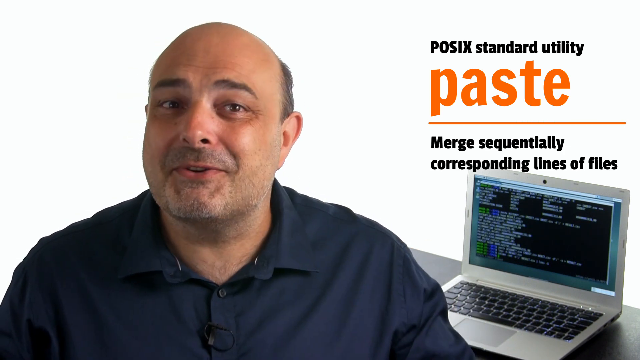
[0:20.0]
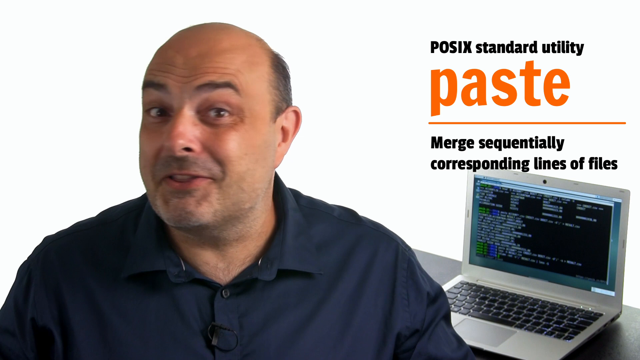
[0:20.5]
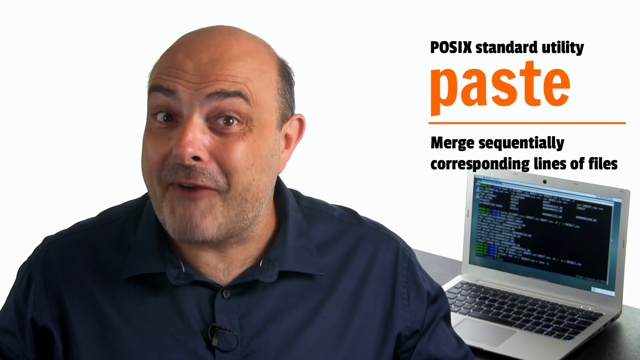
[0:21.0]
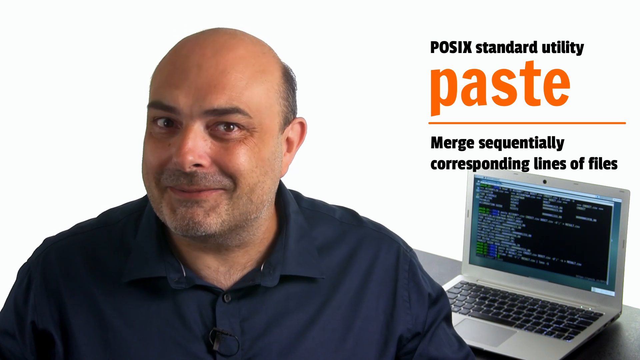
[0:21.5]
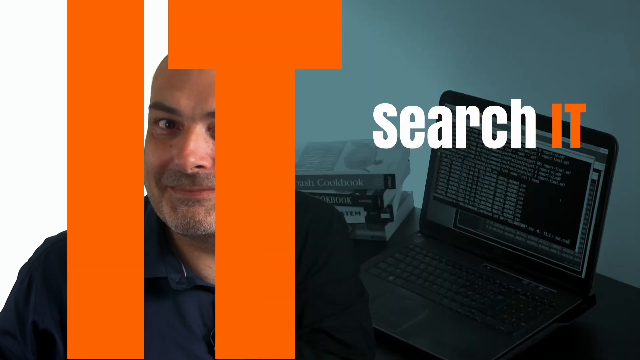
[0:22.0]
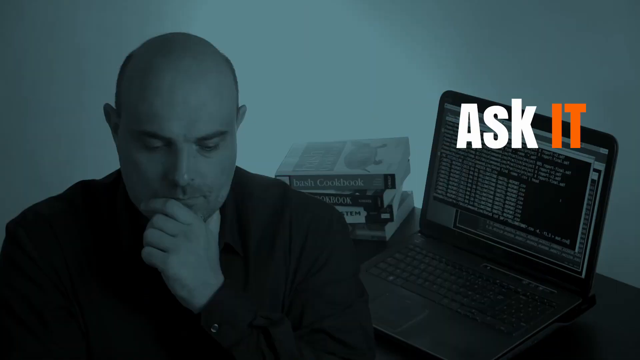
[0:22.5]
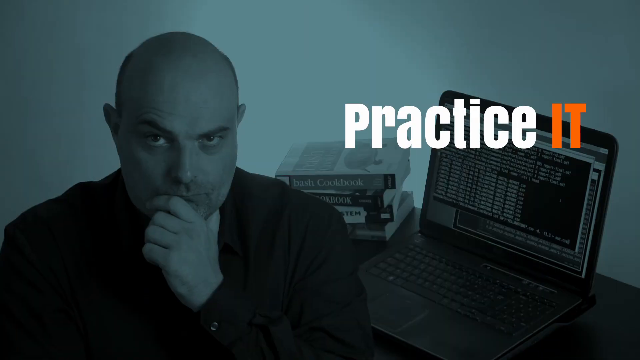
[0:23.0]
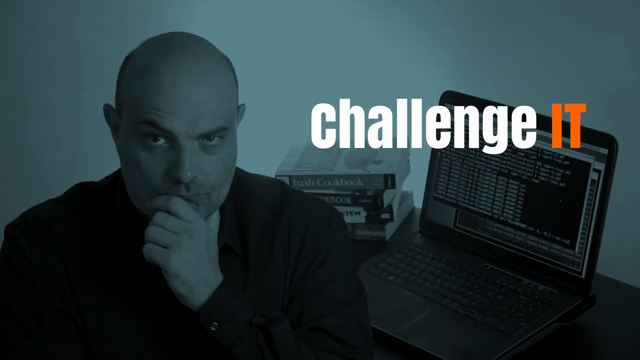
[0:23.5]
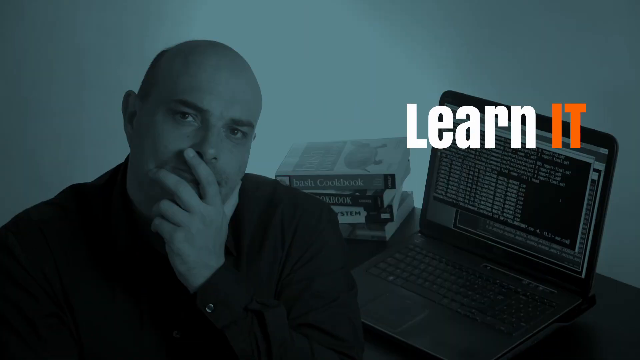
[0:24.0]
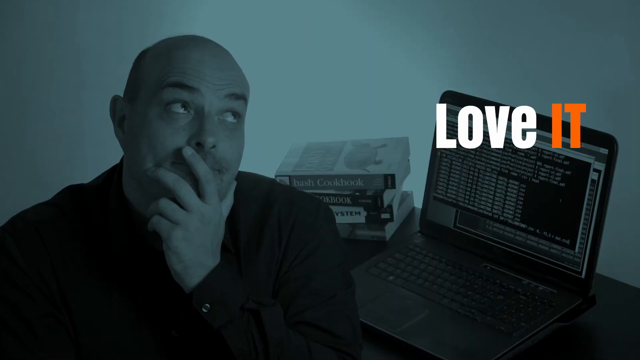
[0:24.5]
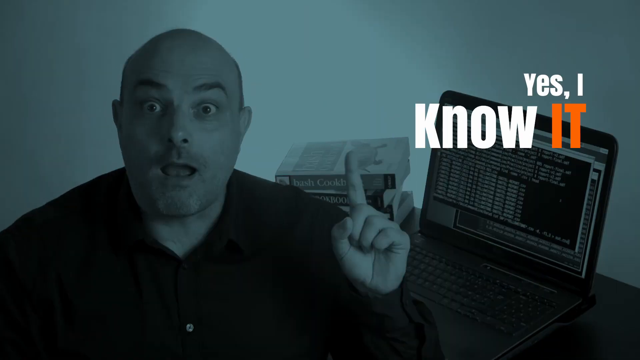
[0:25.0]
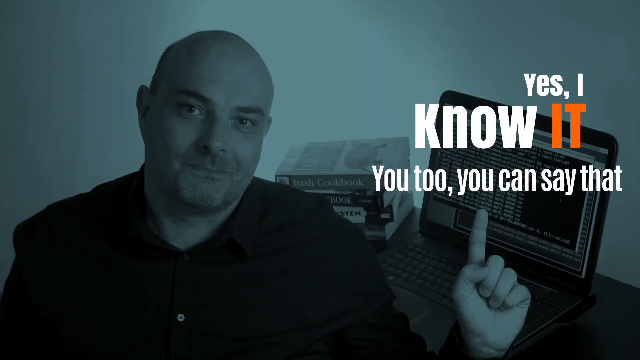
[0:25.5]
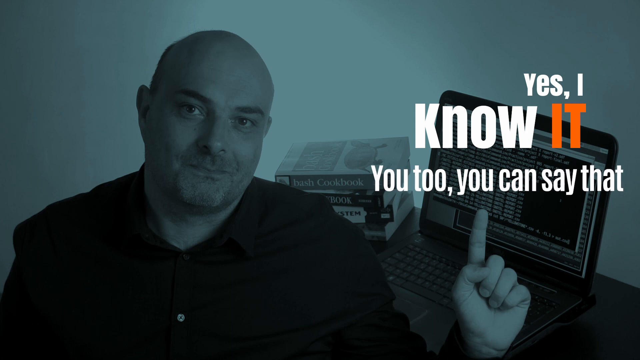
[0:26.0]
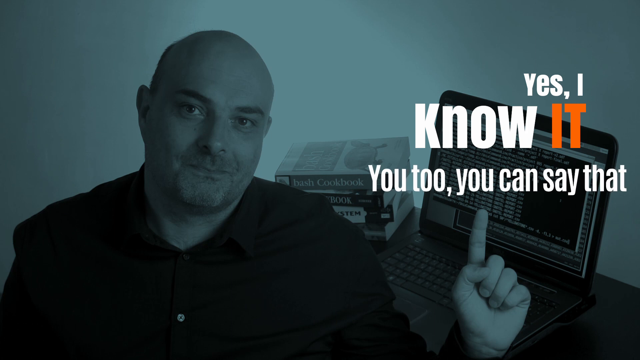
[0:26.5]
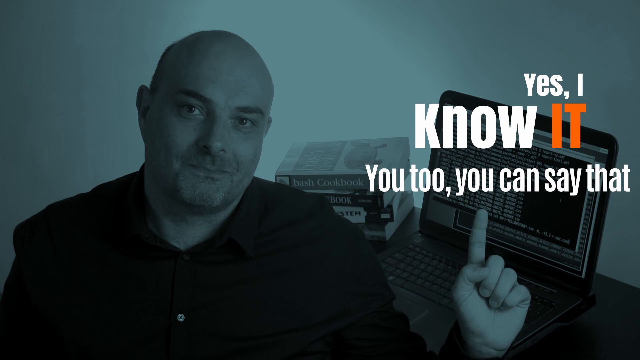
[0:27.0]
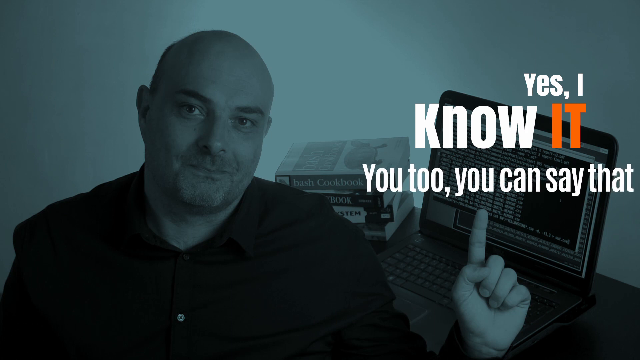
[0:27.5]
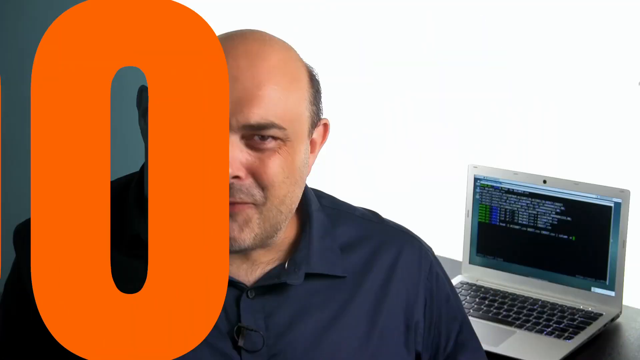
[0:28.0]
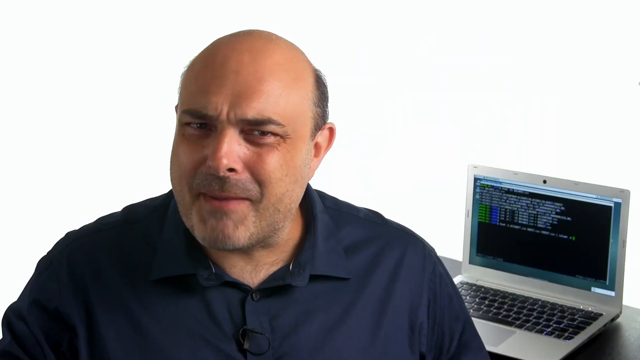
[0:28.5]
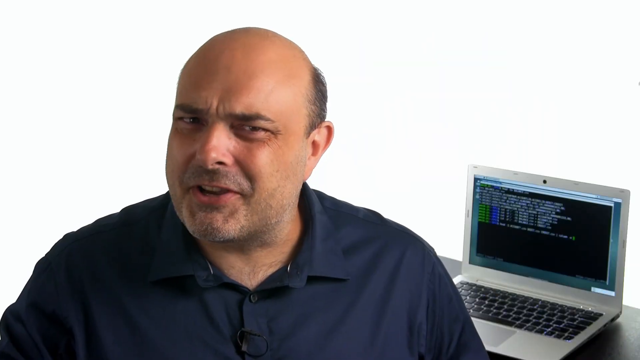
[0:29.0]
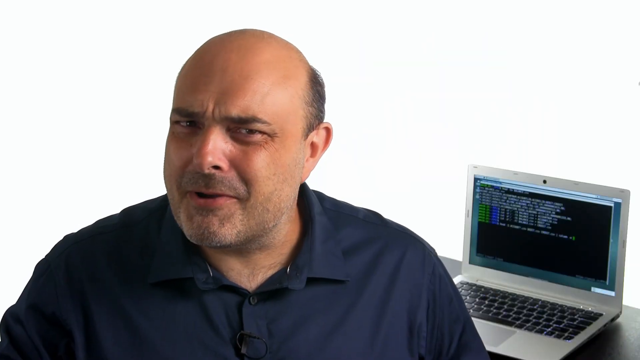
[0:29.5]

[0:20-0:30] The man remains on the left. In the top right, text comes in reading "POSIX standard utility" in black, then "paste" in orange, with "merge sequentially corresponding lines of files" in black below. The man looks at the camera, raises his eyebrows and kind of shakes his head. A wipe comes from the right, revealing a kind of grayed-out, blue-tinted photo of him looking down with his chin resting in his hand, his pointer finger across his chin, other fingers tucked in and thumb under his chin. The laptop is still to the right, and between him and the laptop four books are stacked on the edge of the table. He looks up and raises his left eyebrow. To the right of his head, white lettering continually changes, and then orange text reads "IT." He kind of tilts his head to the right, looks up and brings his finger out, pointing to the side. More text scrolls across as the image wipes off.